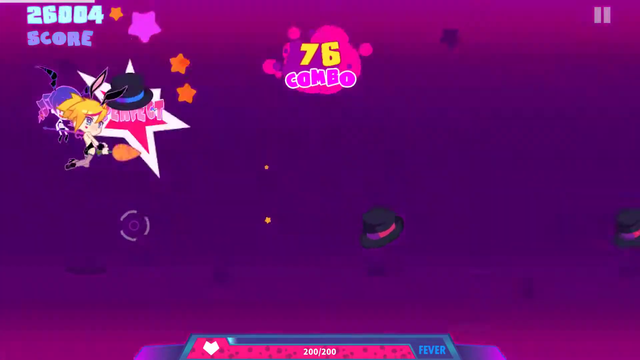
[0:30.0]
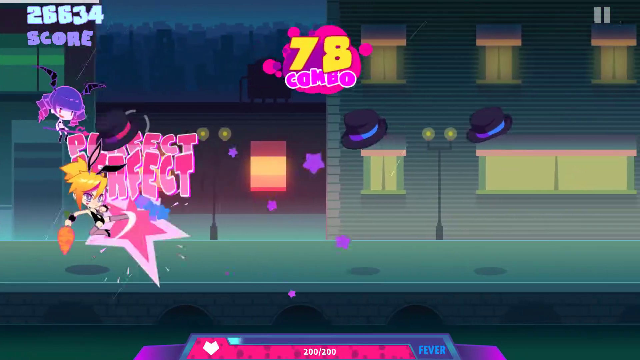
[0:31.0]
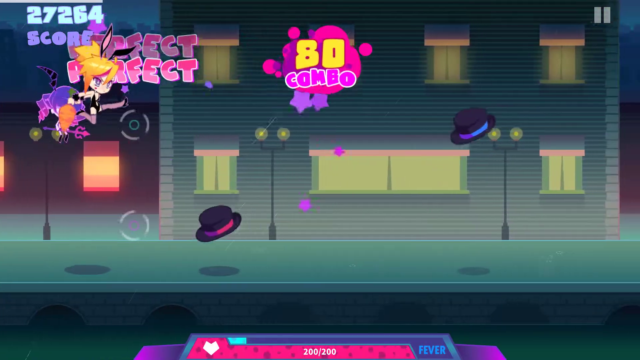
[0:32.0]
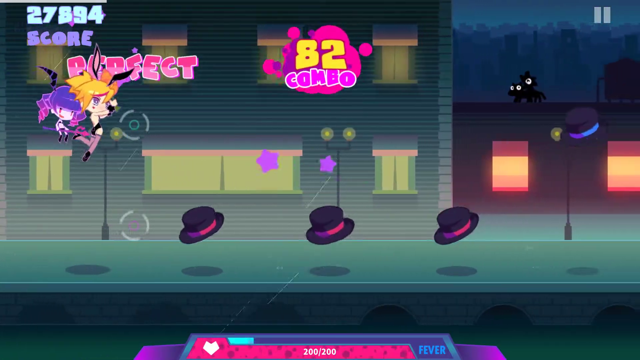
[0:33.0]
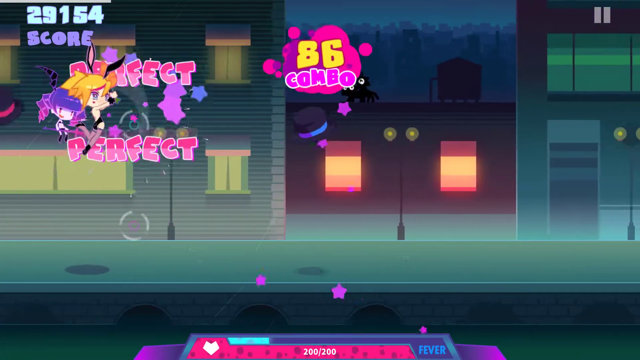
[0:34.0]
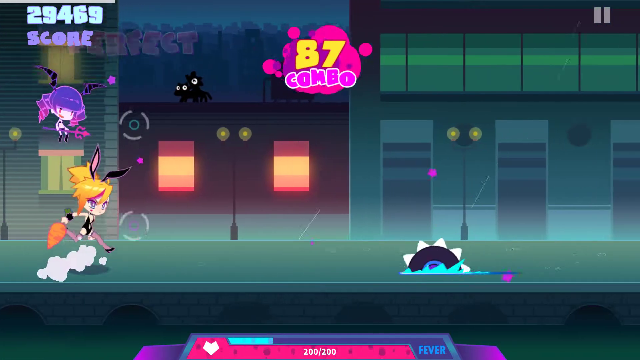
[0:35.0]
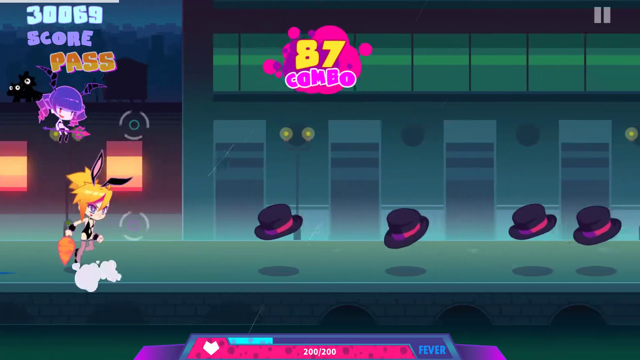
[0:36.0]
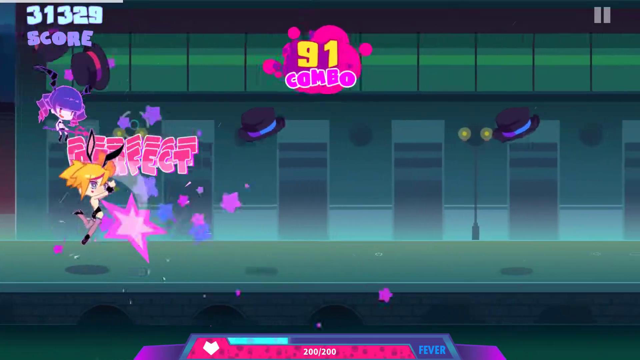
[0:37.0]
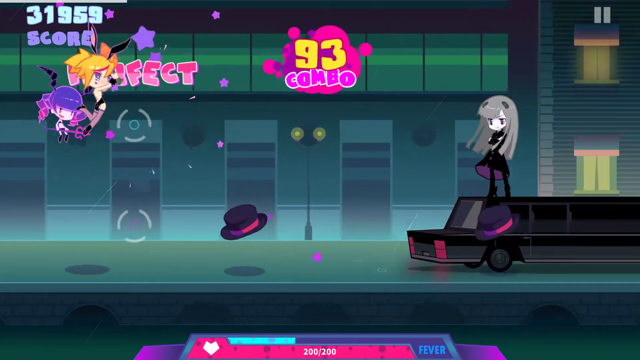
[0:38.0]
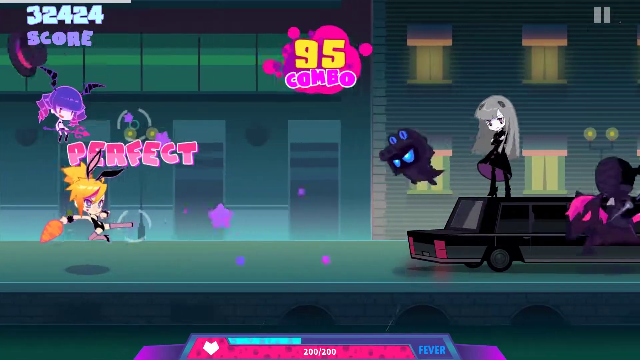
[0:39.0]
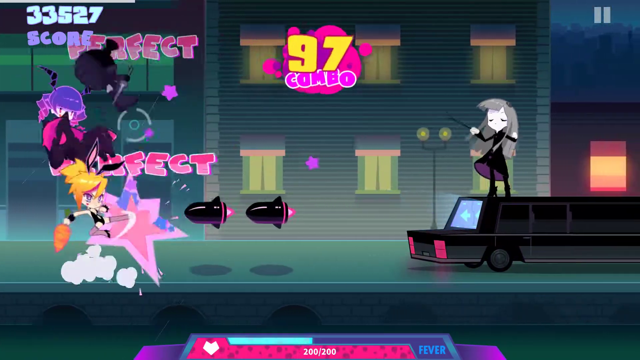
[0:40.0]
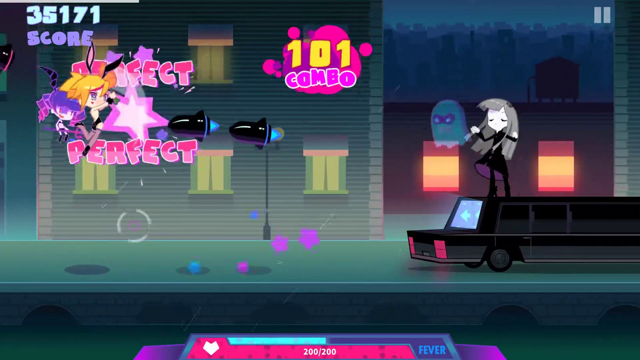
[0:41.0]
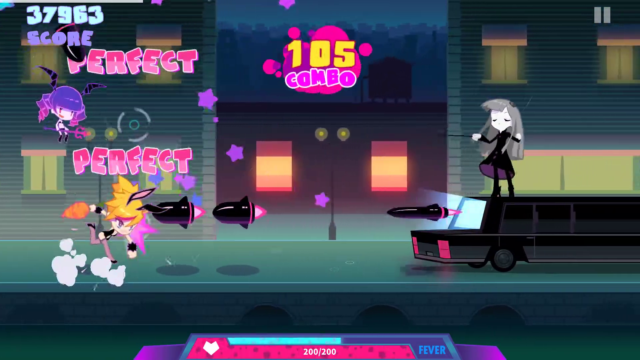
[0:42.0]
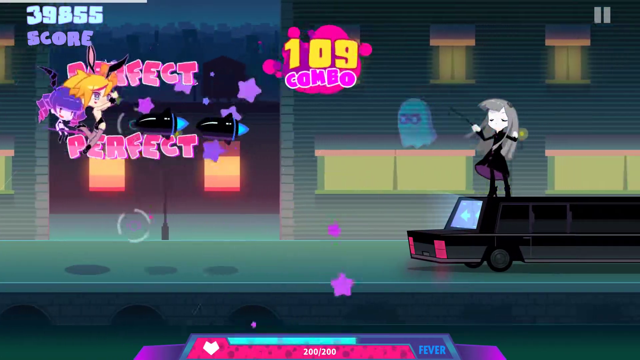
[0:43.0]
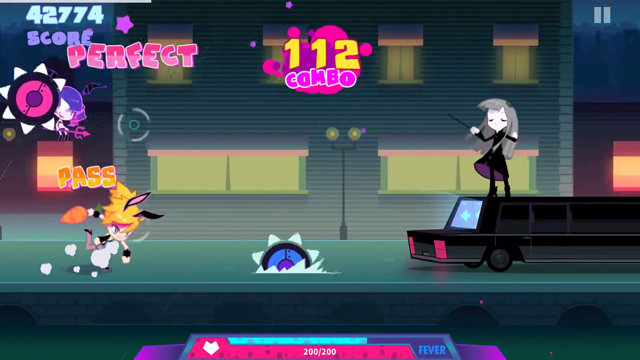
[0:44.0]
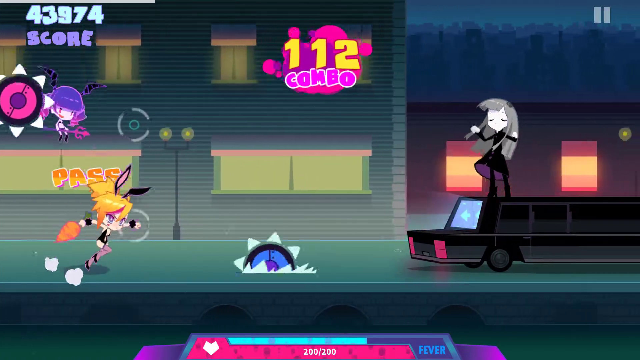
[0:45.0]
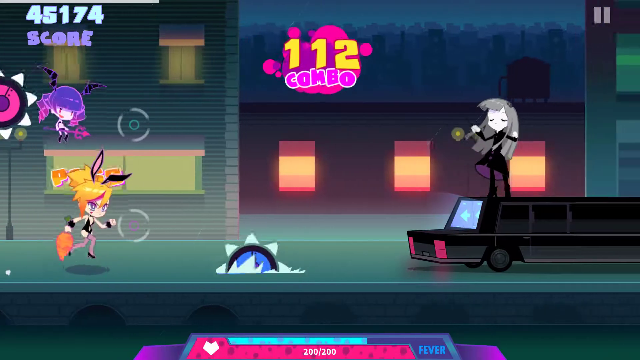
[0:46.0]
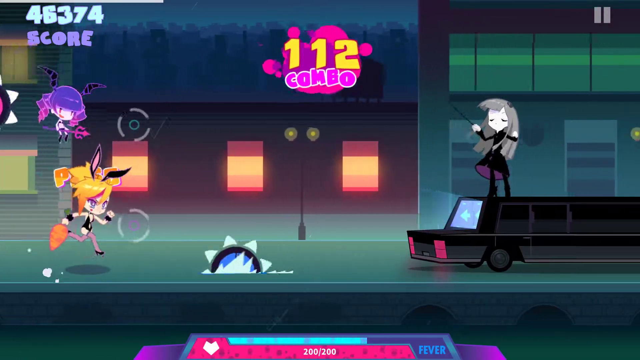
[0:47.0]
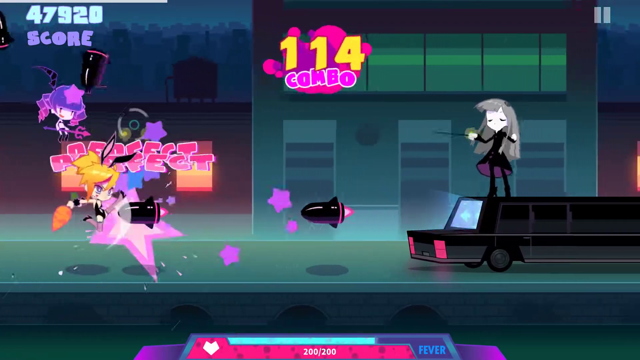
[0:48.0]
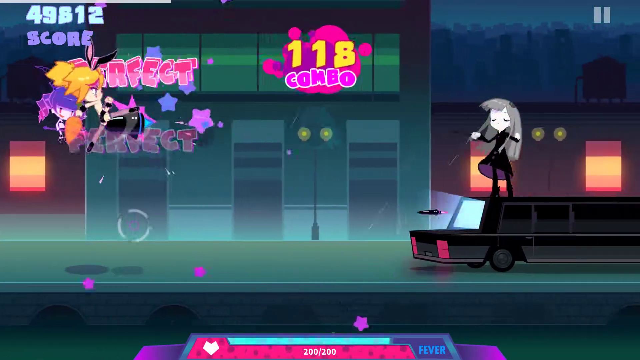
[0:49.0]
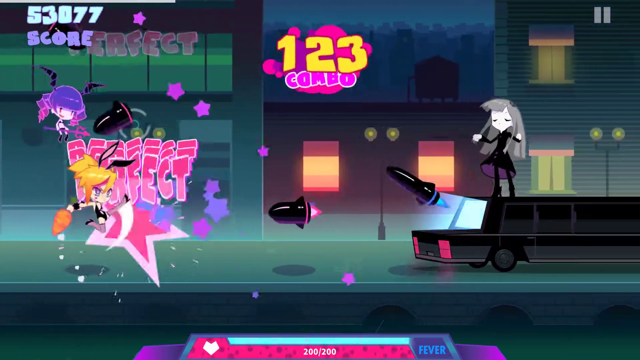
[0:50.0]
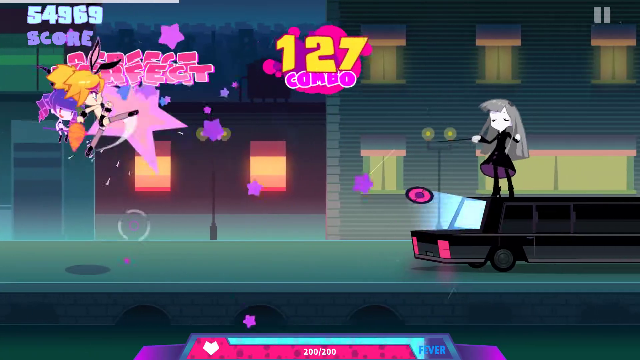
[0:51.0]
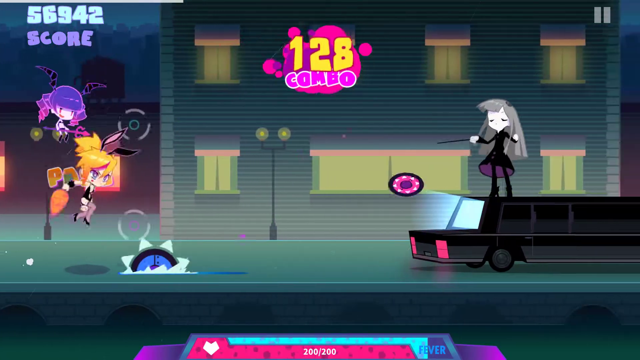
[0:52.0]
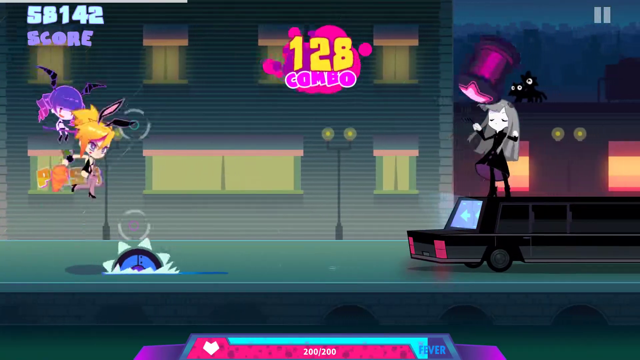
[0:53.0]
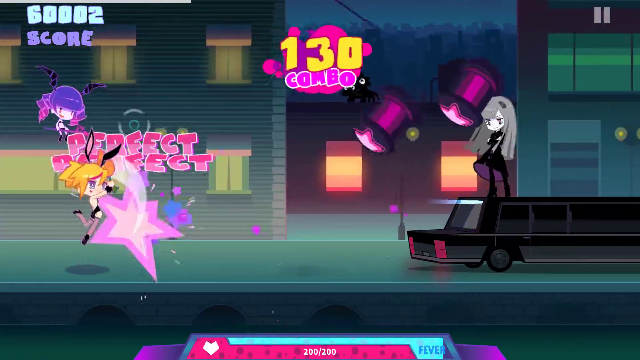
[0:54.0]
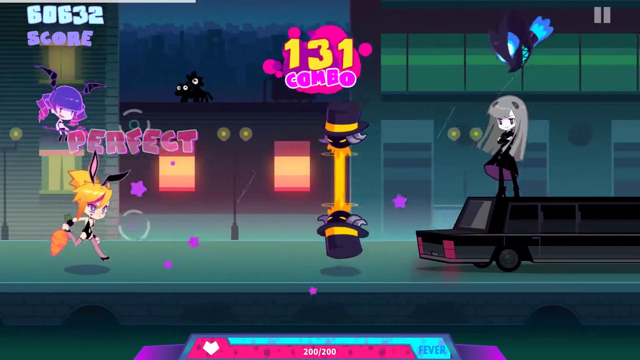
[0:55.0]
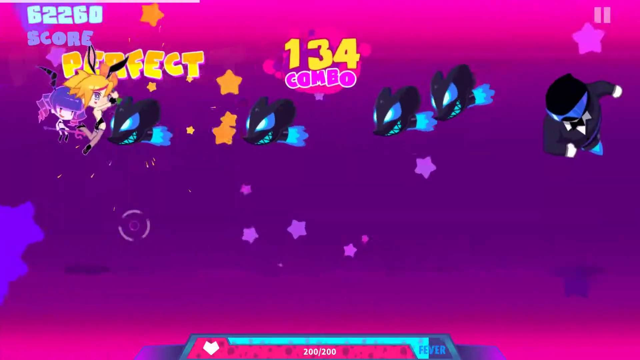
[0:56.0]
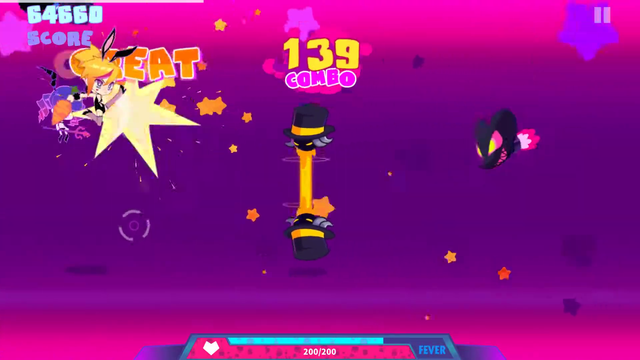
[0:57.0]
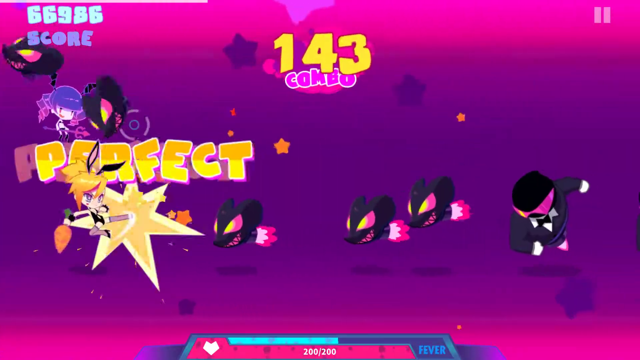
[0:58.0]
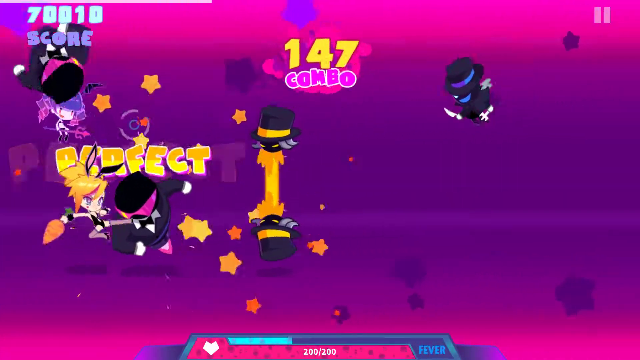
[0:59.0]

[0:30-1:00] The screen keeps moving from right to left, showing a street and a sidewalk with buildings along the edge of the sidewalk. One house has a large window with two small windows to its left and right and small windows above. Past it is a smaller, dark building with two little orange windows, and then a green building with doors very close to one another and windows above them. A female anime character with black bunny ears, a tight black leather suit, stockings and high heels runs along the sidewalk as the camera follows her. Above her floats a little anime character with a purple hat. In front of her is the end of a limousine, and black bombs come out of the end of it; she tries to catch everything coming out of the limousine. A girl anime character, also dressed in black, is standing up on the limousine.